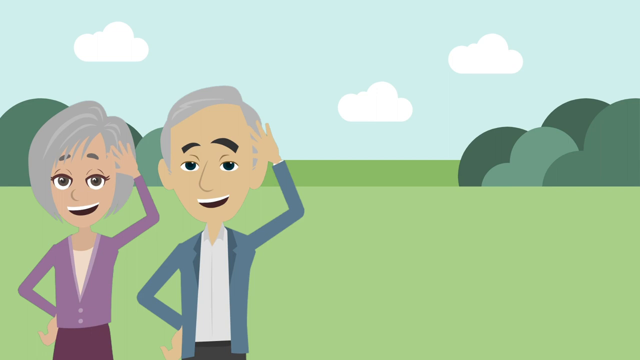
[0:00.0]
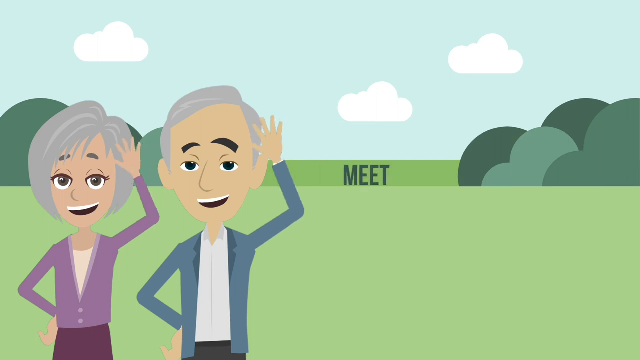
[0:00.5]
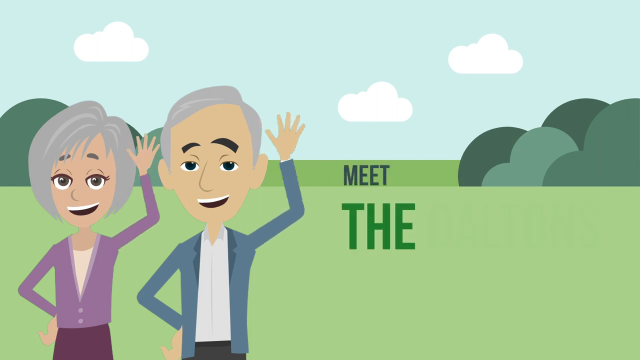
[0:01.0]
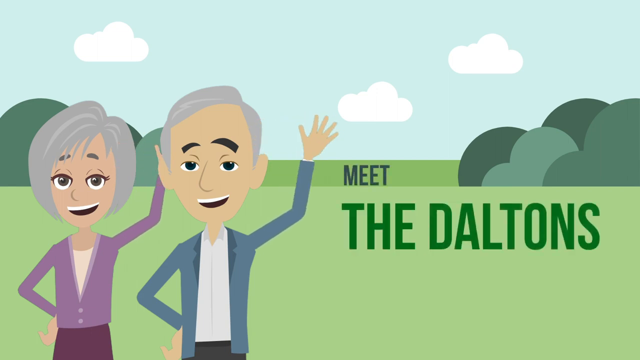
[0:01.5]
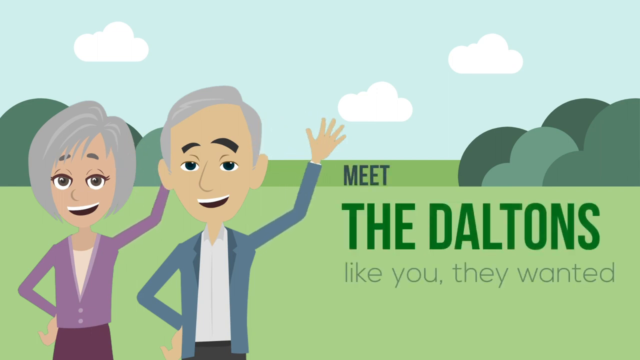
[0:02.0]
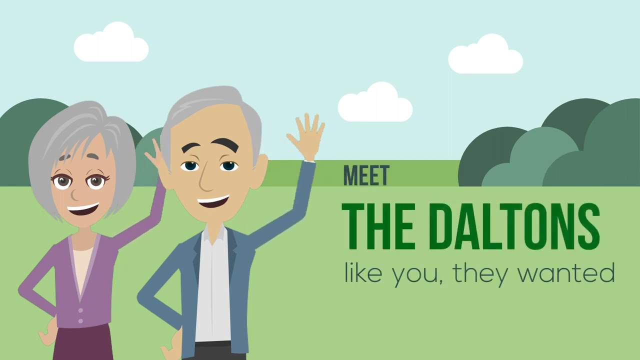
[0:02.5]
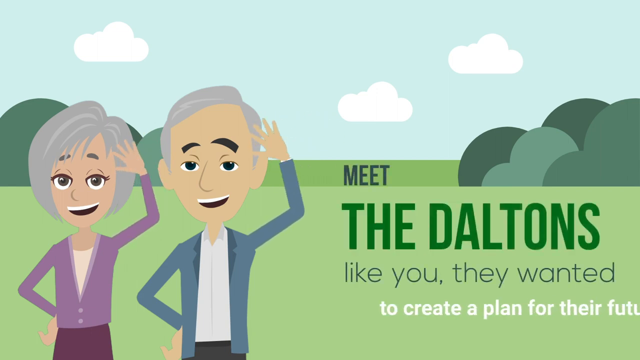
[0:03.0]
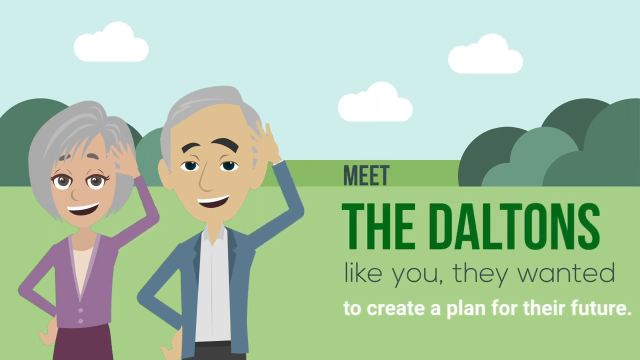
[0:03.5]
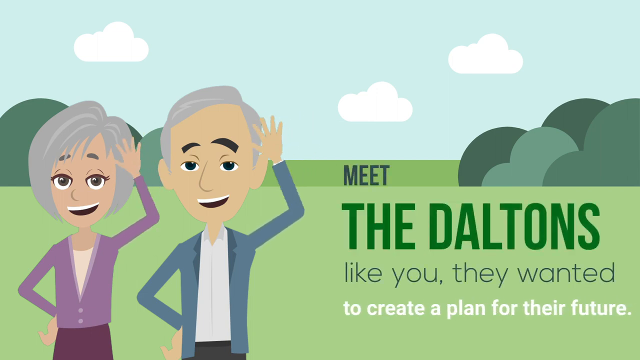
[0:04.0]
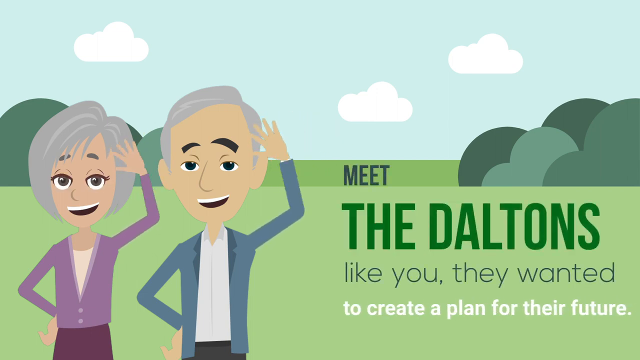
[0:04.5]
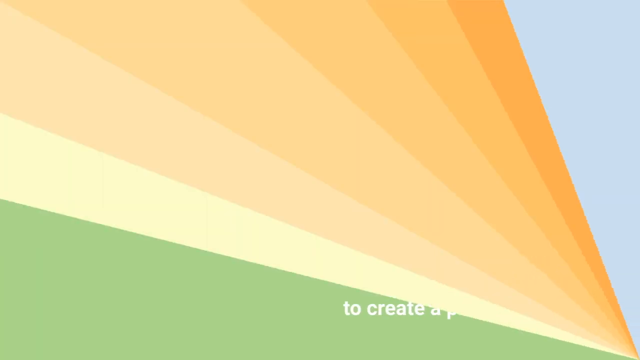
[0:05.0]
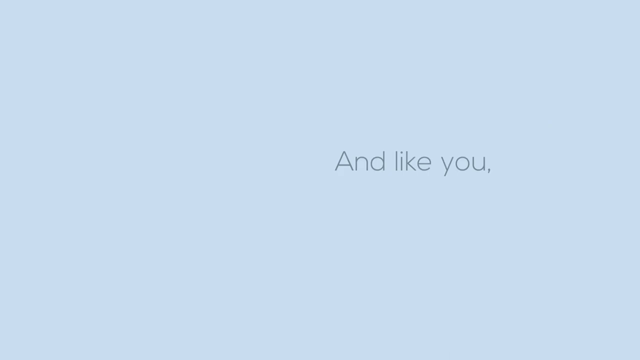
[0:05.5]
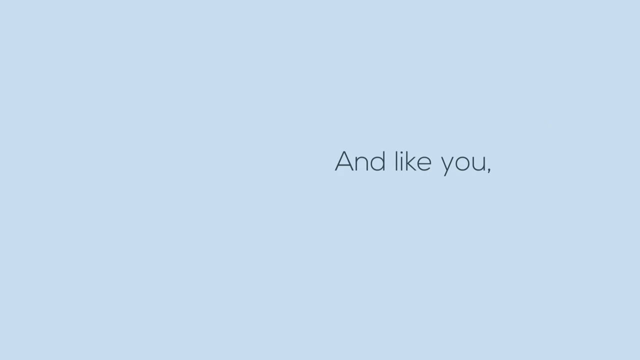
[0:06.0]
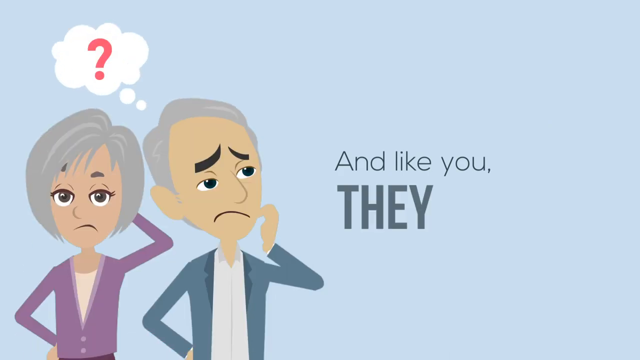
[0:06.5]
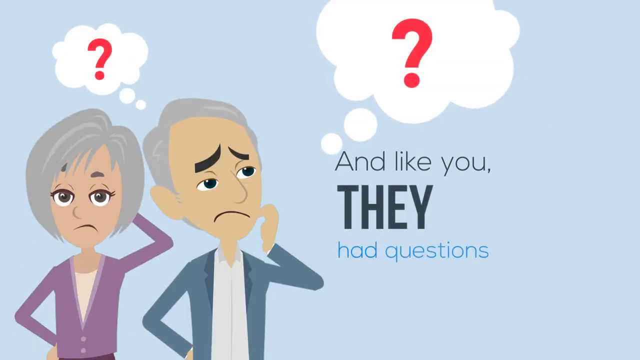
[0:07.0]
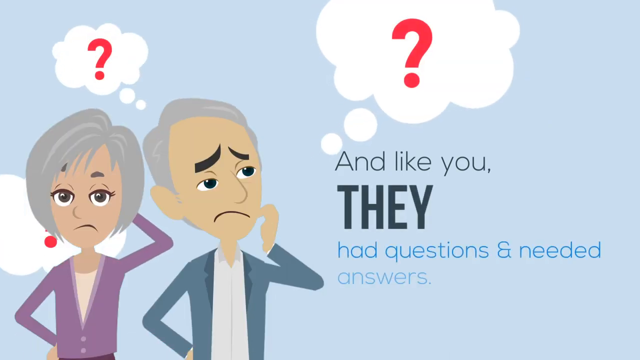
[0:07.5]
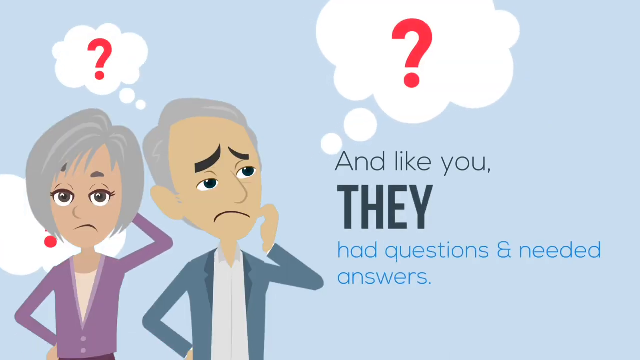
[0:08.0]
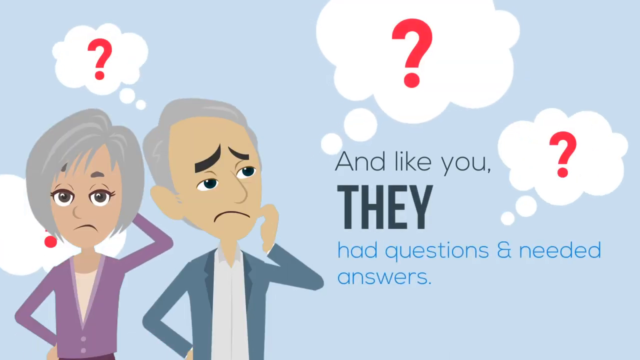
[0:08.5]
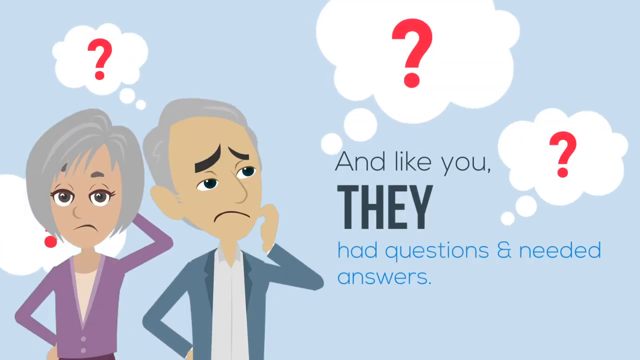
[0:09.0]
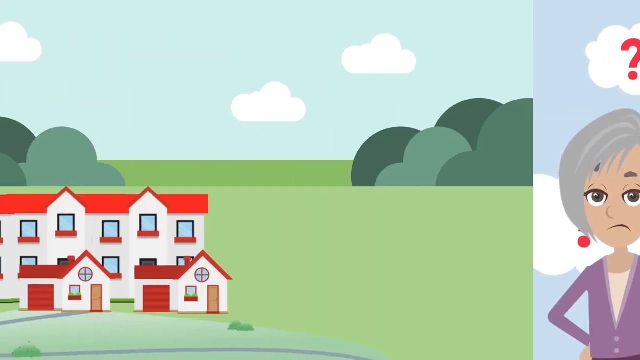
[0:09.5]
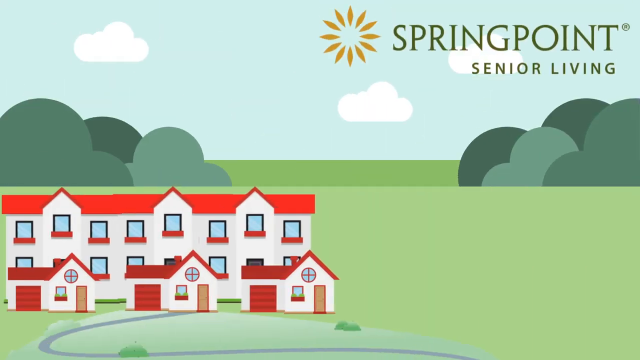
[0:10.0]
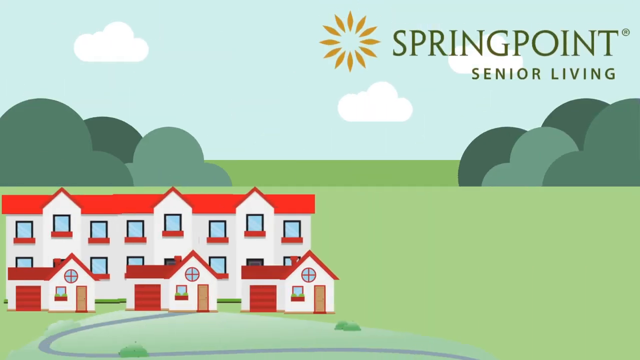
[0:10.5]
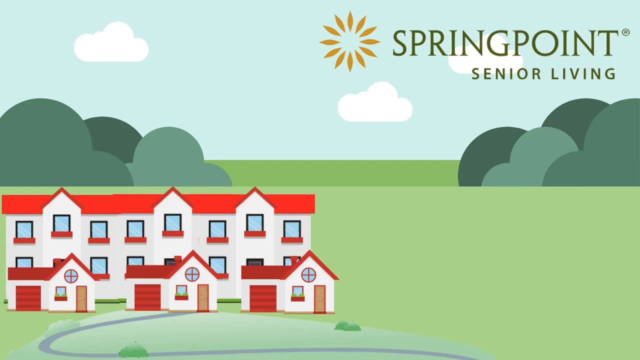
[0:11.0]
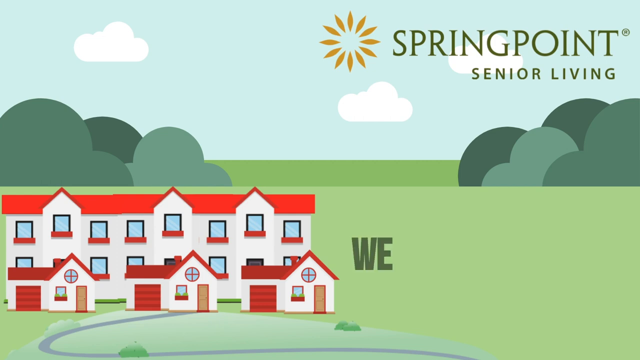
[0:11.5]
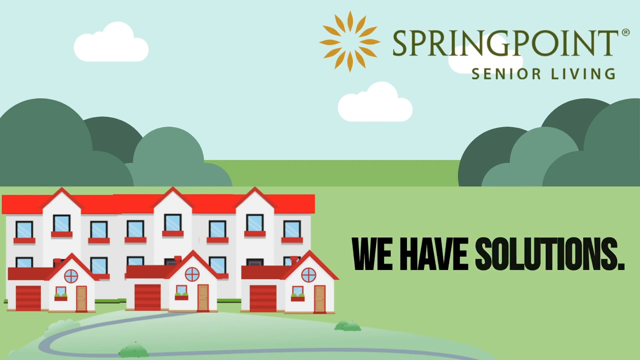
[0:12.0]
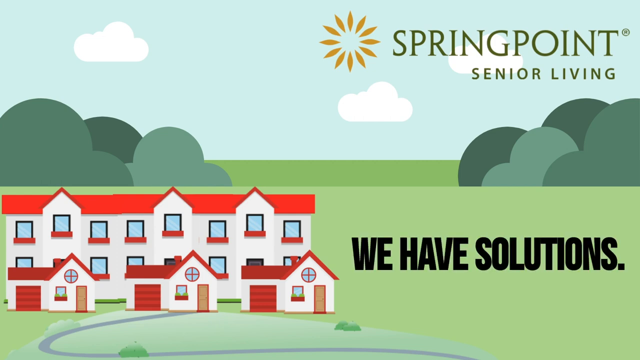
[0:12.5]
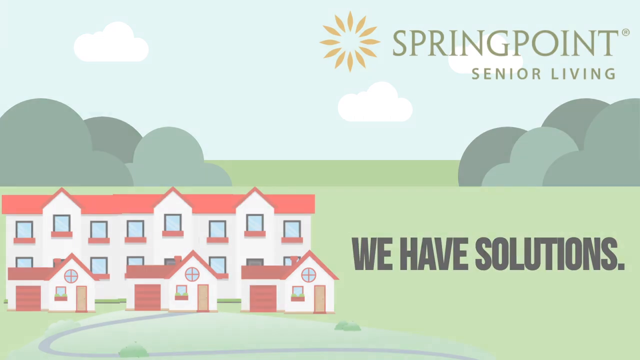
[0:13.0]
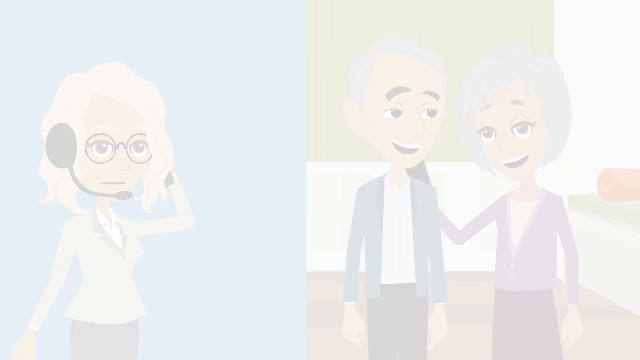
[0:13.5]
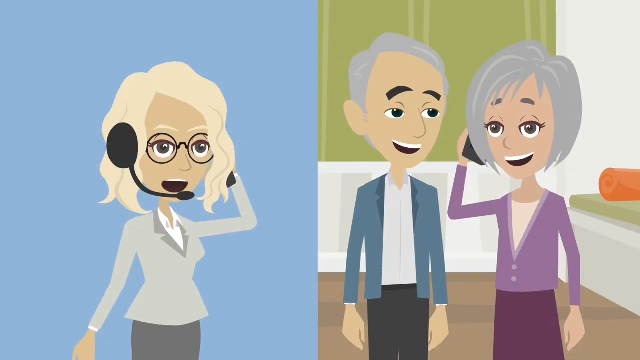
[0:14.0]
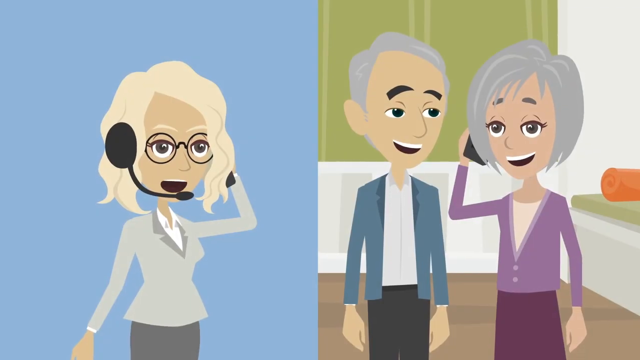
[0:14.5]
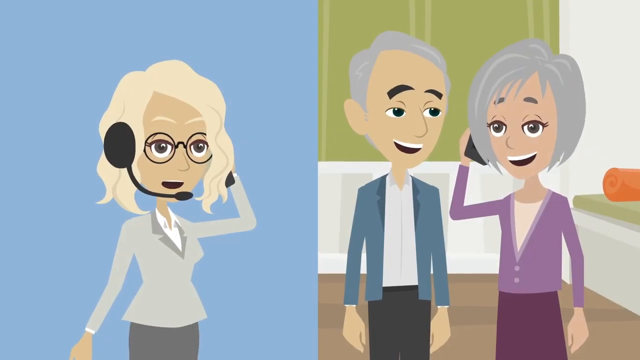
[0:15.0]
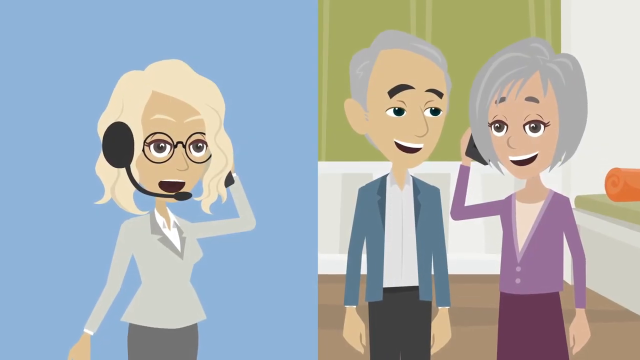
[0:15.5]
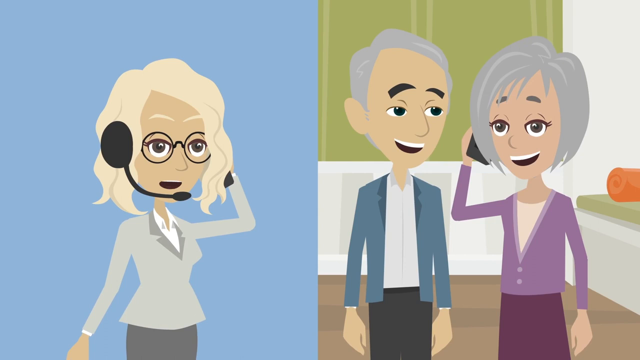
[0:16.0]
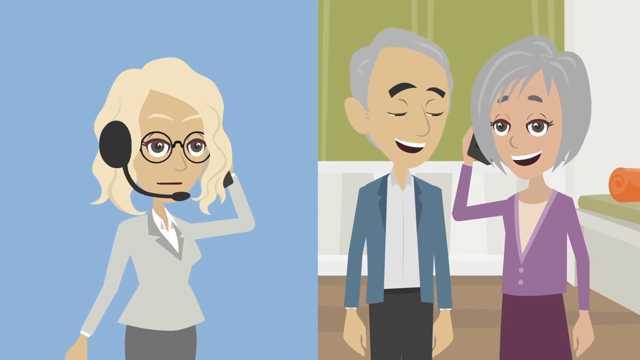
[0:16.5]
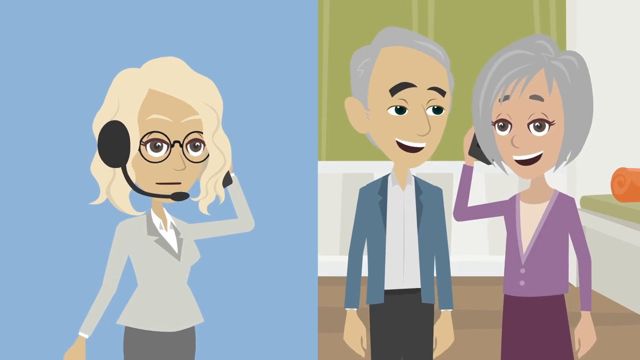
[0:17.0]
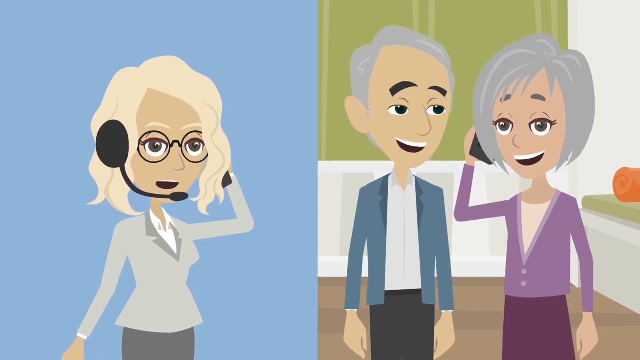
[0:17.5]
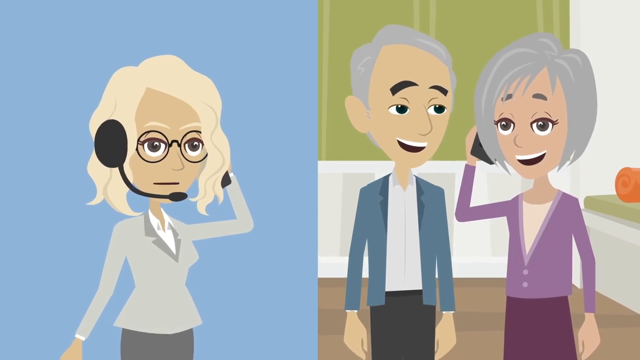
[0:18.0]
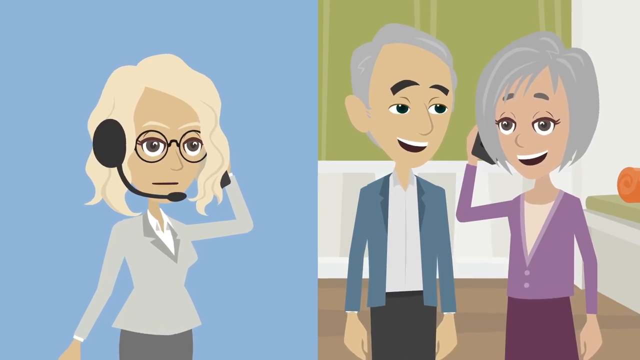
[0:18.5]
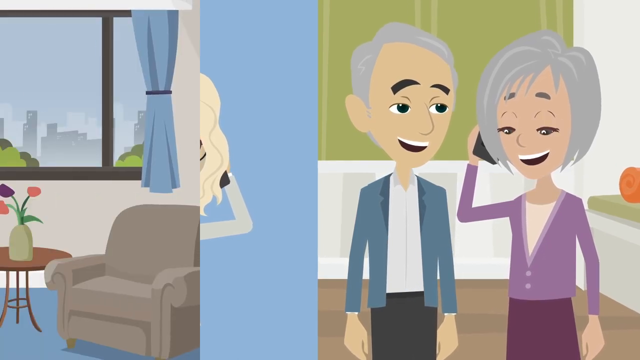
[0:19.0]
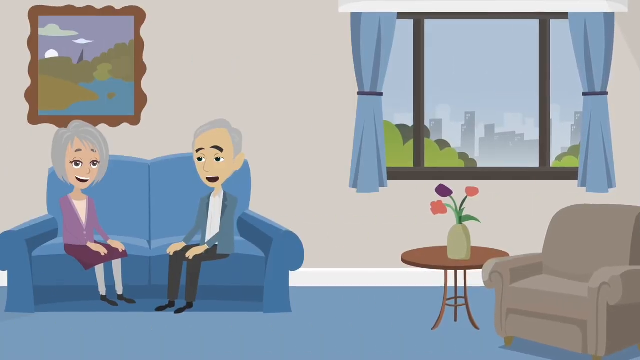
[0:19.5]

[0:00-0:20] The video opens with an animated scene of two elderly people with grey hair waving at the camera. Behind them is an animated backdrop of grass, trees or bushes, and a blue sky with three white clouds. Text appears on screen reading "Meet the Daltons. Like you, they wanted to create a plan for their future." After a transition, the elderly couple are animated scratching their heads, with question marks in white clouds around them, and the text reads "And like you, they had questions and needed answers." The scene then changes to an animation of fields, sky and trees with three buildings in front. A logo for Spring Point Senior Living appears with the words "We have solutions." Next, the elderly couple are on a phone call with an advisor wearing a headpiece. Another transition shows the couple sitting in the senior living accommodation.